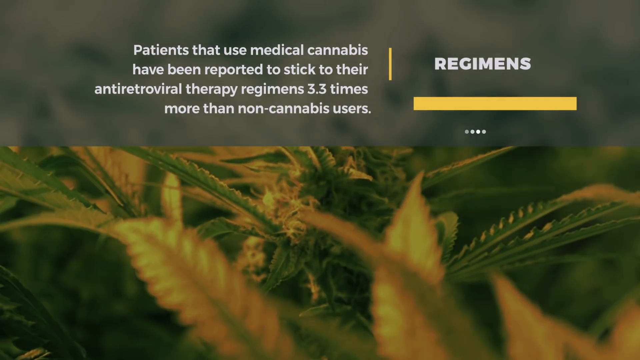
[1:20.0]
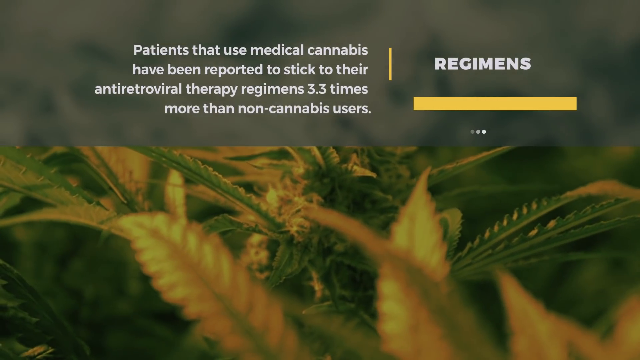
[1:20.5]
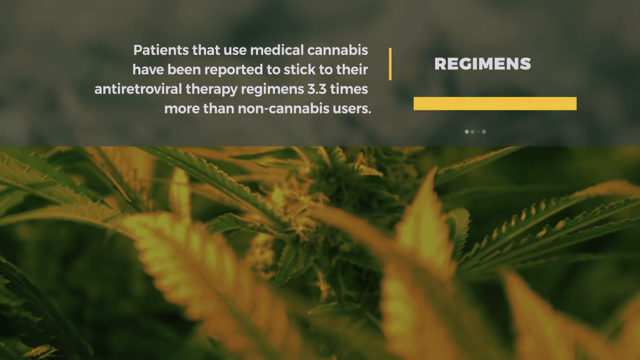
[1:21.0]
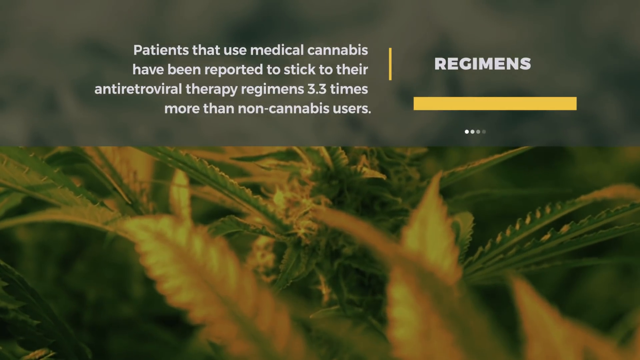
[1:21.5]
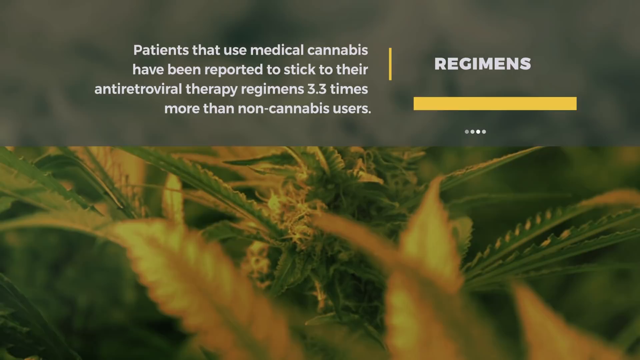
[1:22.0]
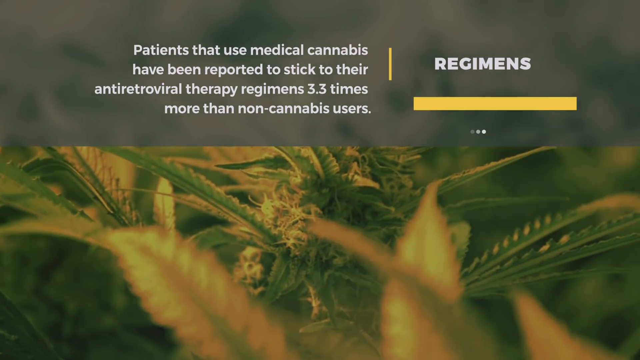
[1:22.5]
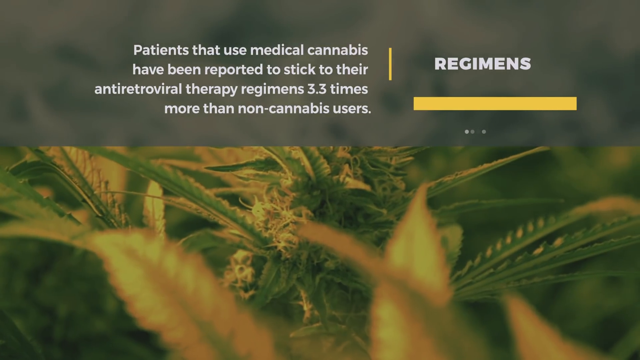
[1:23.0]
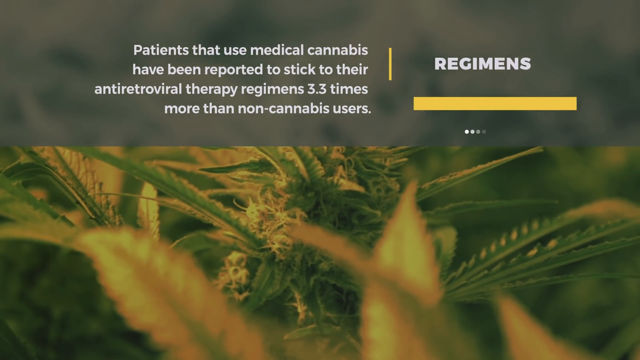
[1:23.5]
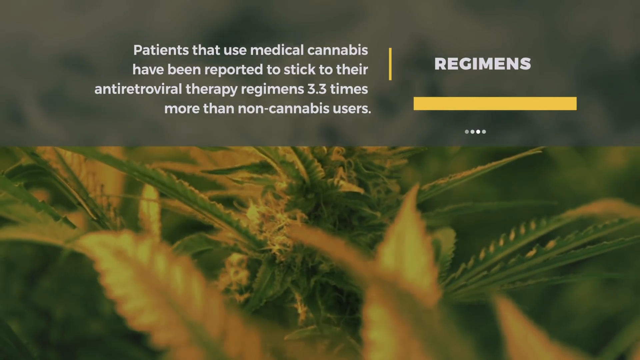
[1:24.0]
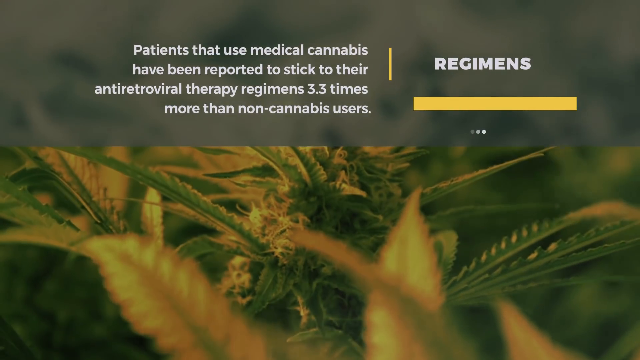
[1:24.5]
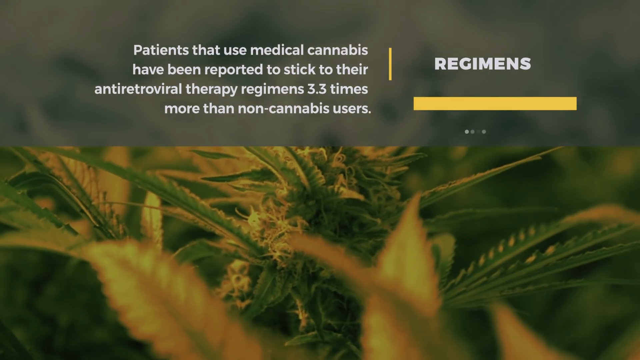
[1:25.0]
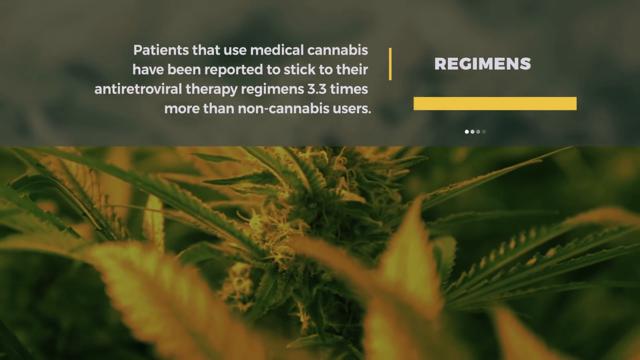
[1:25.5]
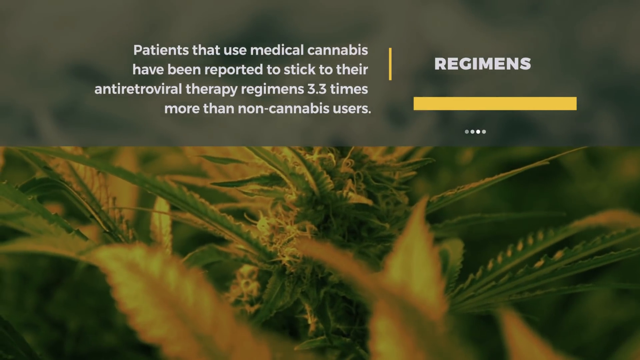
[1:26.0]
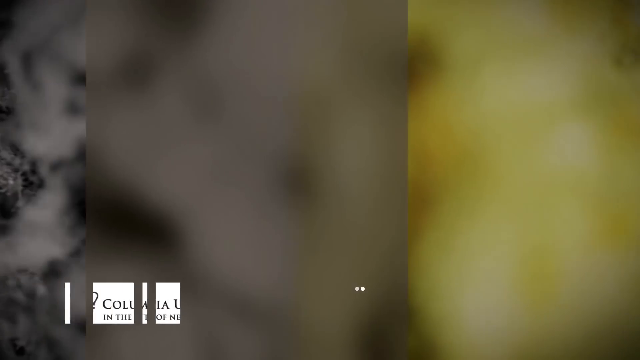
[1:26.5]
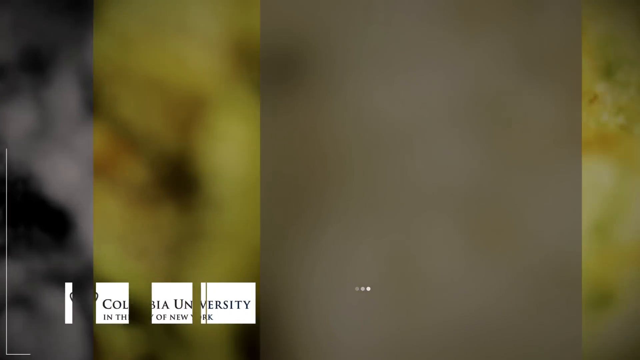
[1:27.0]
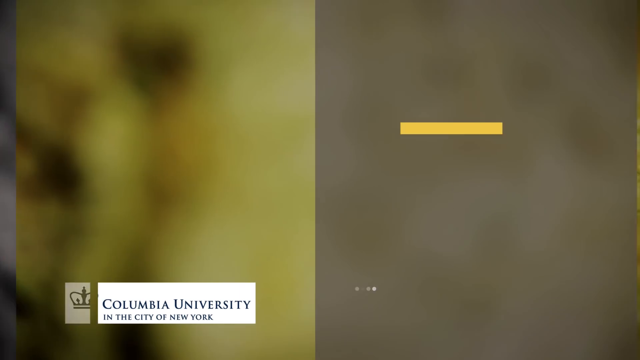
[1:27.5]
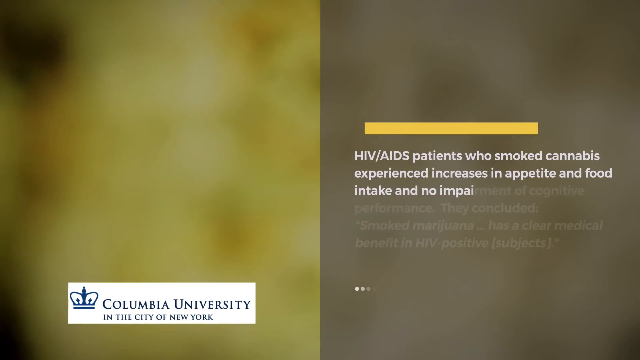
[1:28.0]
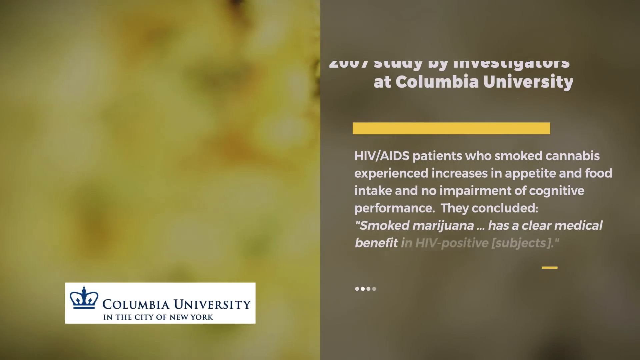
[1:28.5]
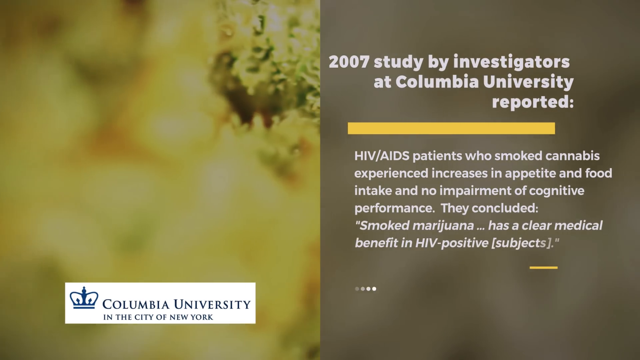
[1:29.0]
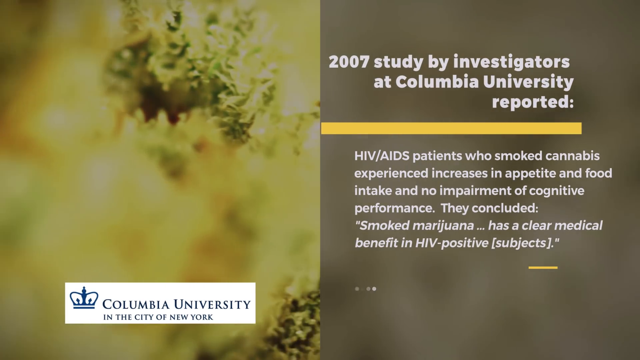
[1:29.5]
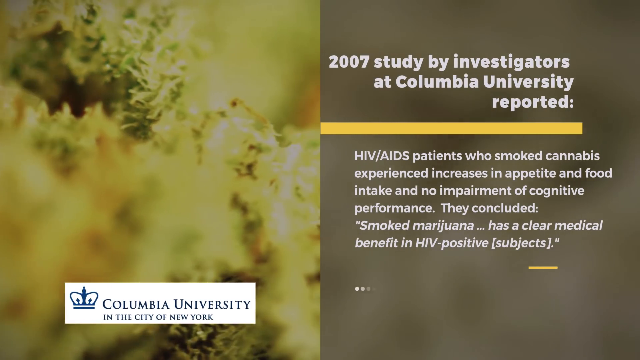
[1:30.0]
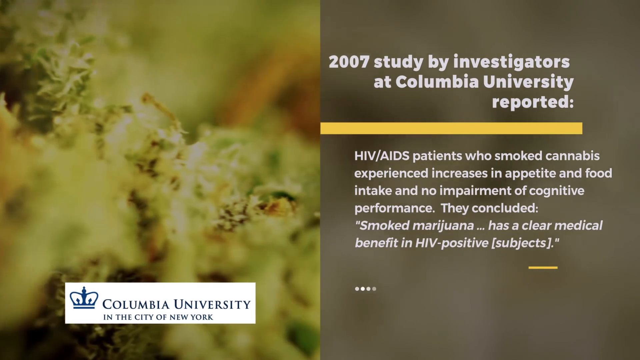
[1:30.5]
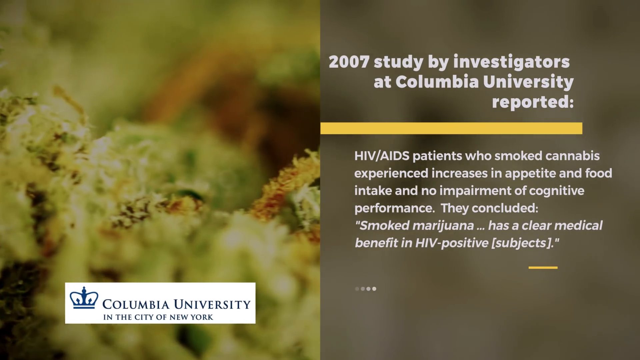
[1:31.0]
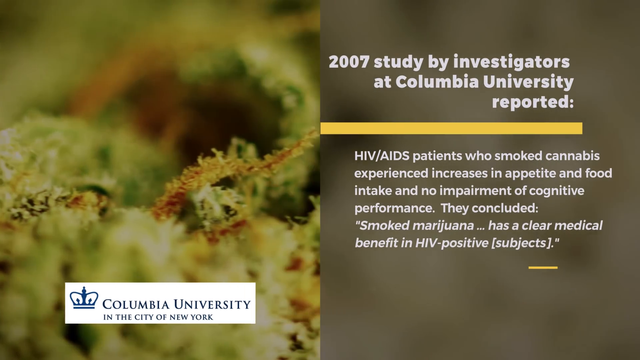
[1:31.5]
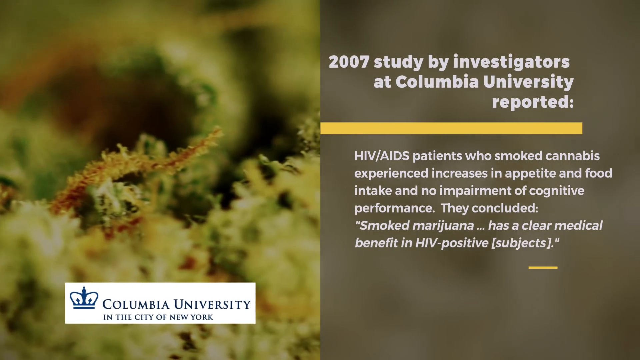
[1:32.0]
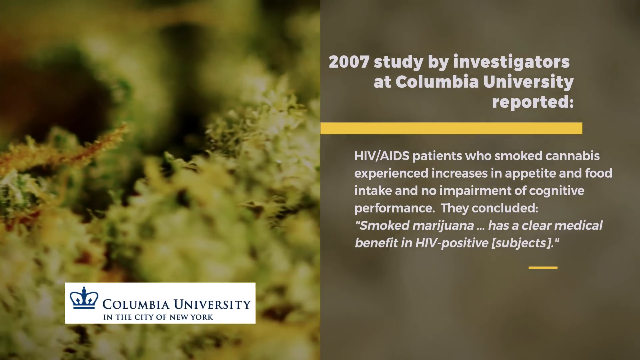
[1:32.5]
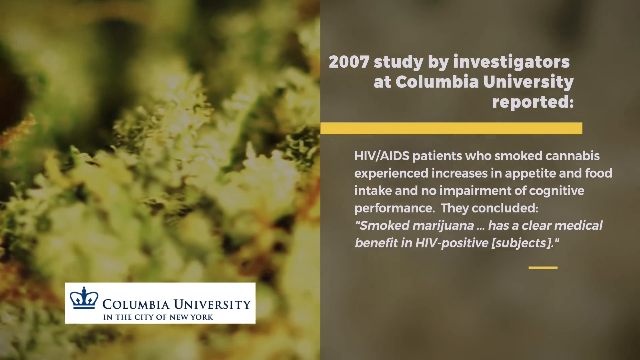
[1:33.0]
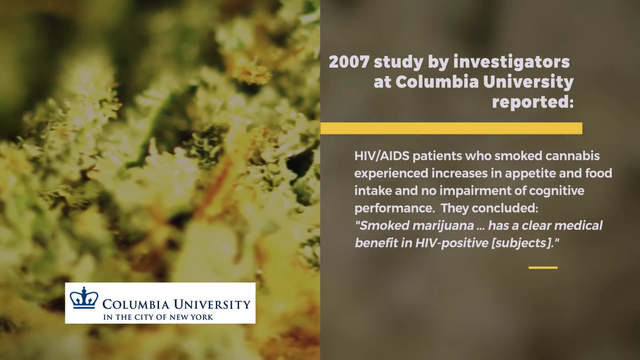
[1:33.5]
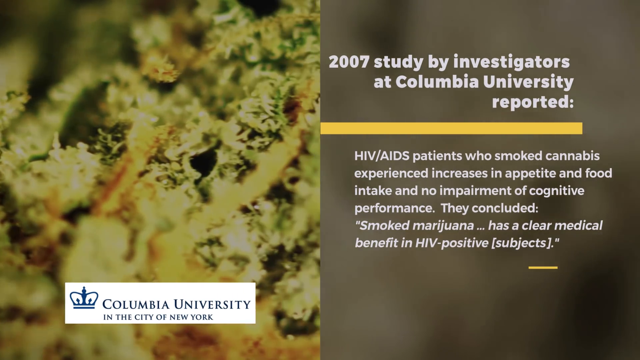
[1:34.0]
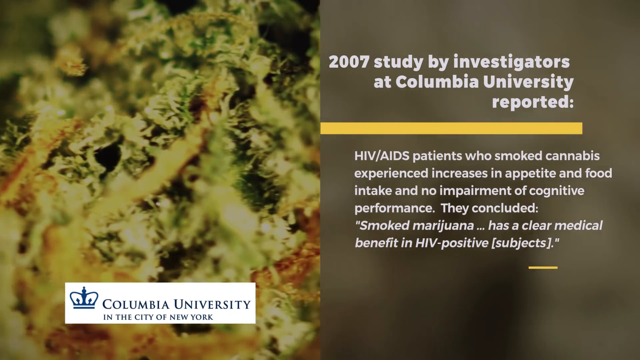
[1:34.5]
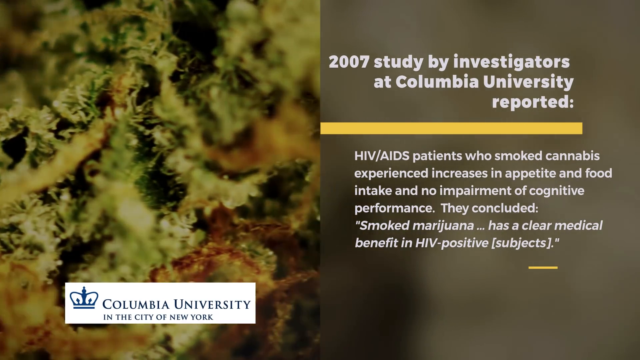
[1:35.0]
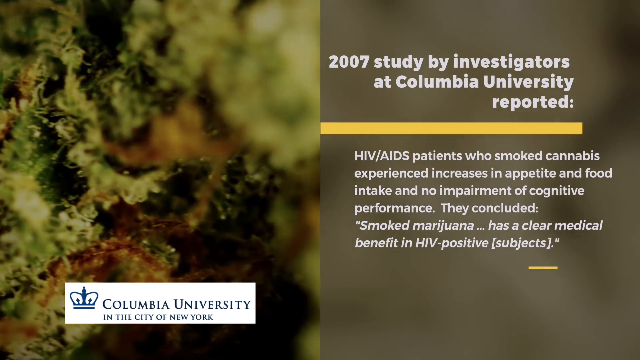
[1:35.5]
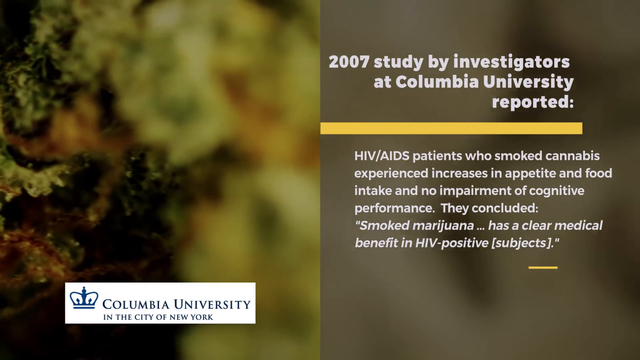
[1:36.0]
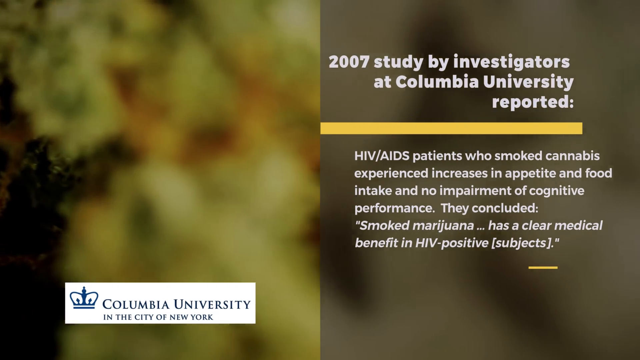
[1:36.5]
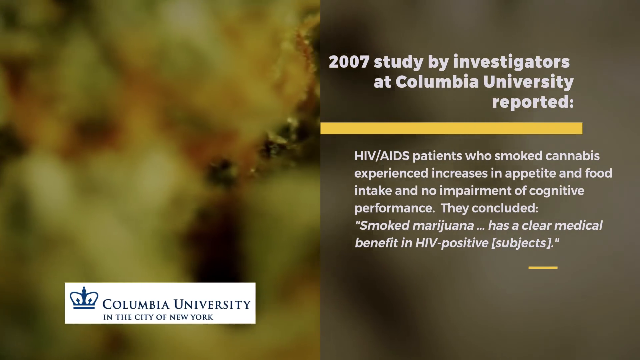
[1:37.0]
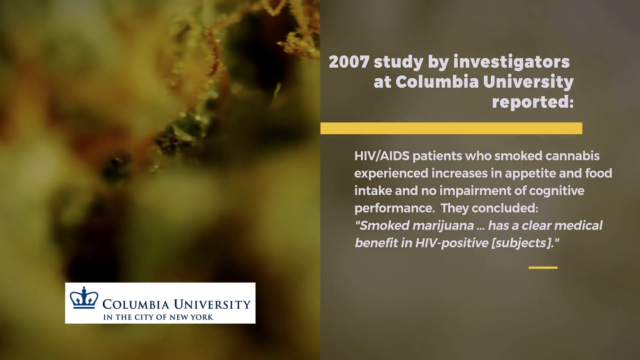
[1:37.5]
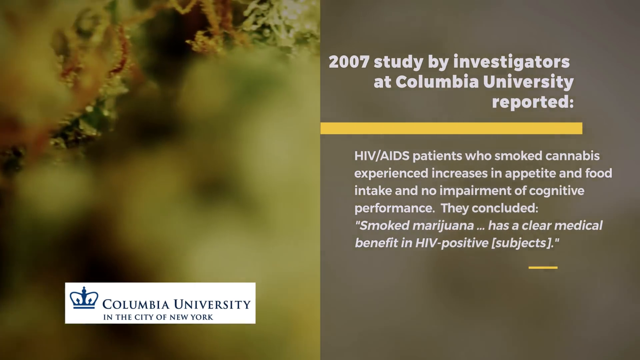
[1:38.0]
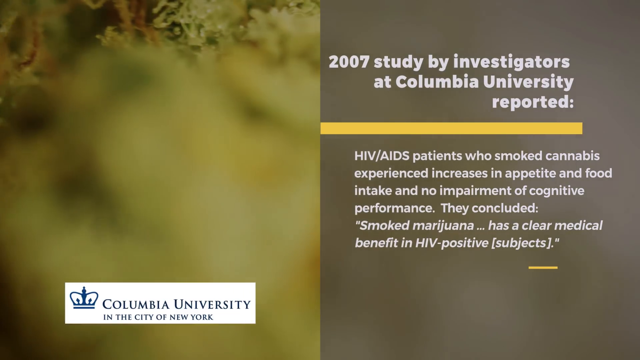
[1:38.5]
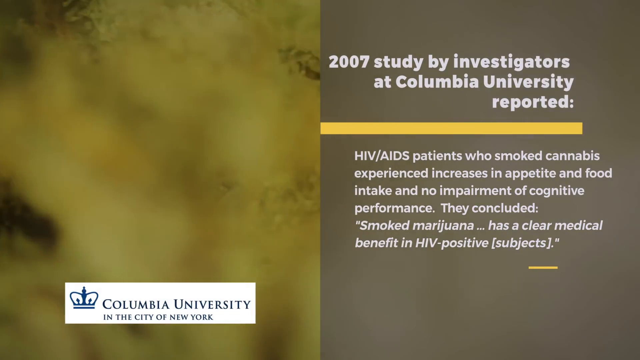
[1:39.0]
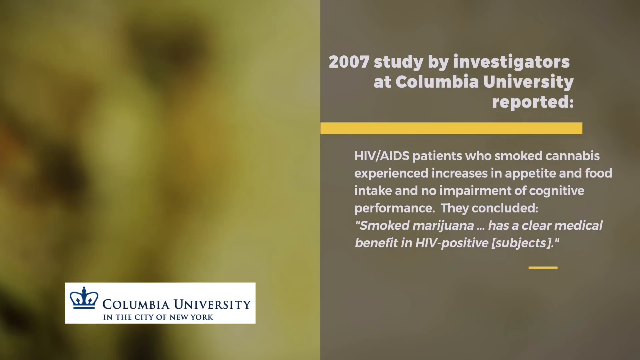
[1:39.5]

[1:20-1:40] The screen reading "patients that use medical cannabis have been reported to stick to their antiretroviral therapy regimens 3.3 times more than non-cannabis users" is showing. The video then moves to another screen with the text "a 2007 study by investigators at Columbia University reported" and "HIV/AIDS patients who smoke cannabis experience increases in appetite and food intake and no impairment of cognitive performance. They concluded smoke marijuana has a clear medical benefit in HIV positive subjects."